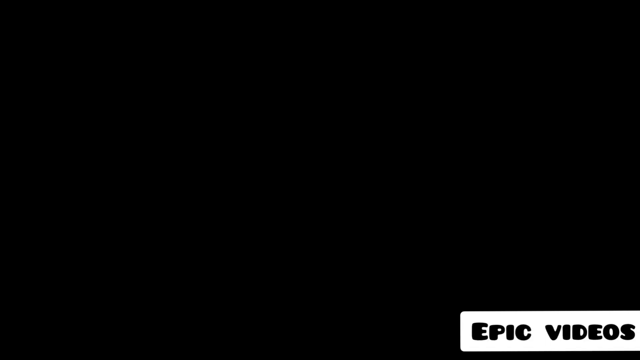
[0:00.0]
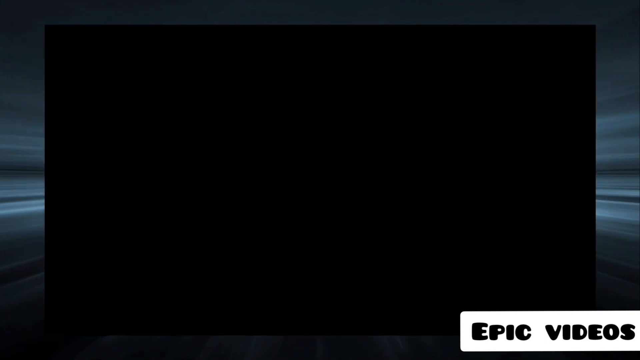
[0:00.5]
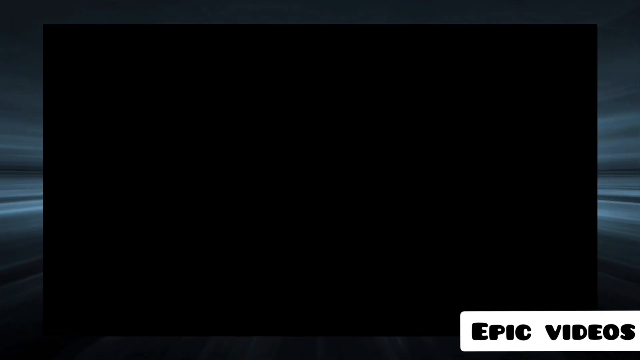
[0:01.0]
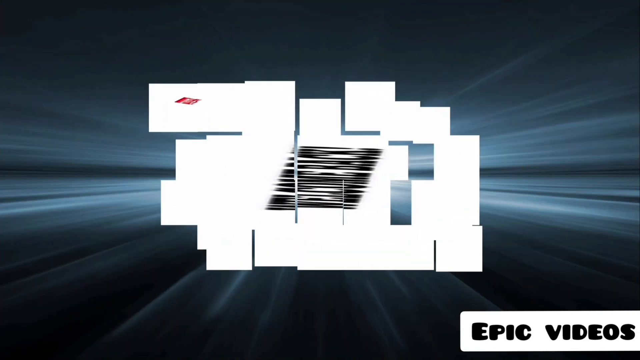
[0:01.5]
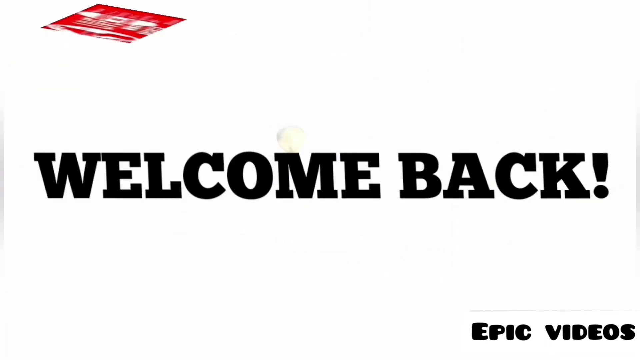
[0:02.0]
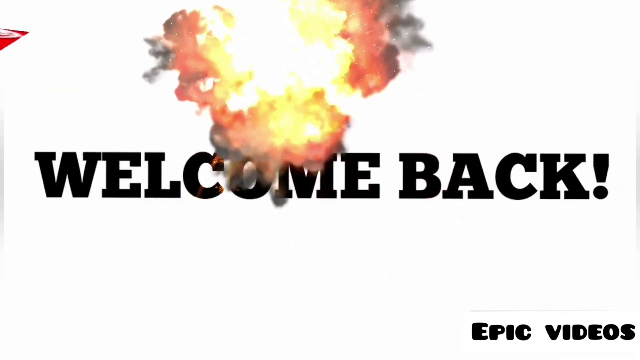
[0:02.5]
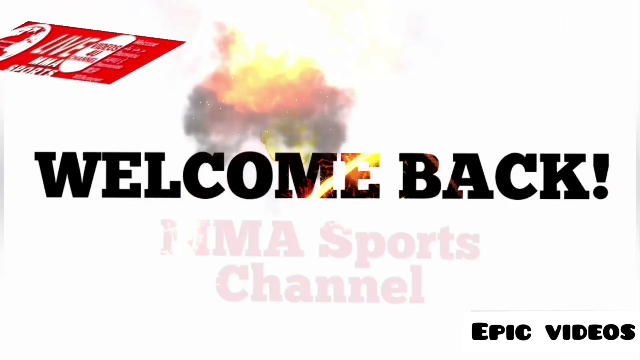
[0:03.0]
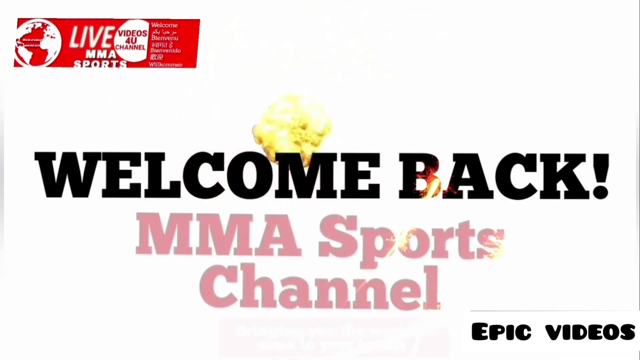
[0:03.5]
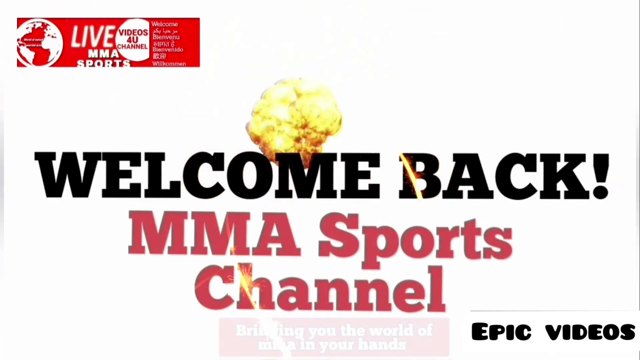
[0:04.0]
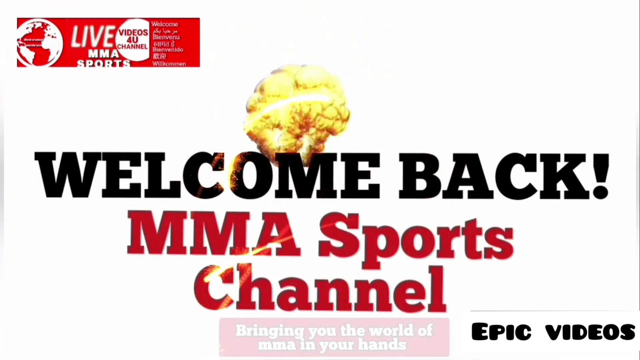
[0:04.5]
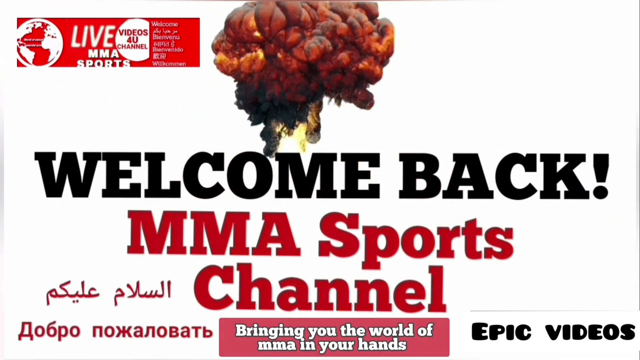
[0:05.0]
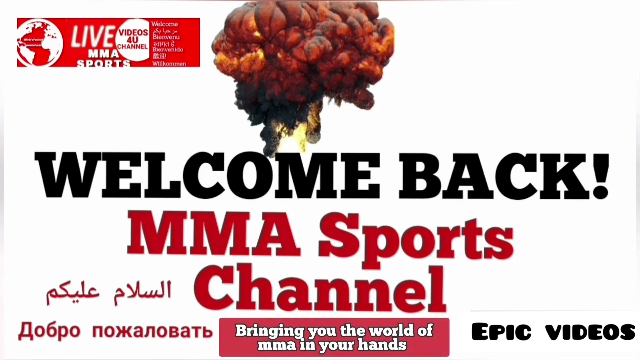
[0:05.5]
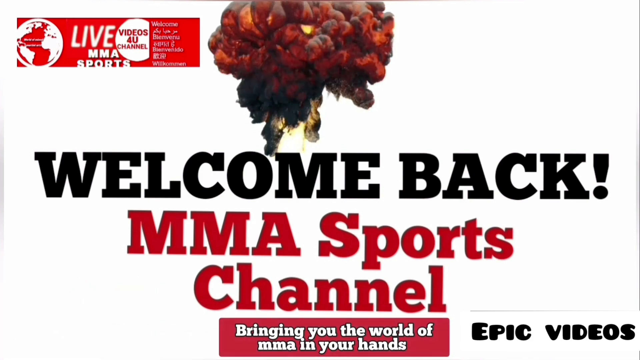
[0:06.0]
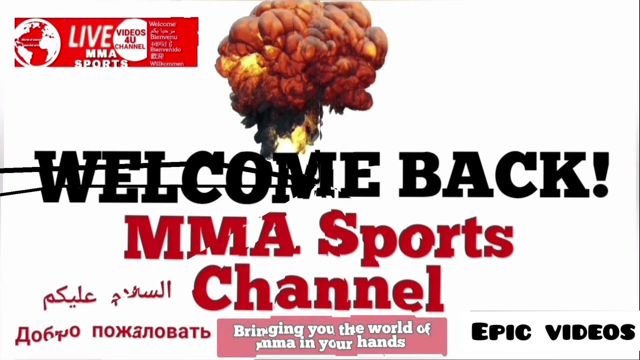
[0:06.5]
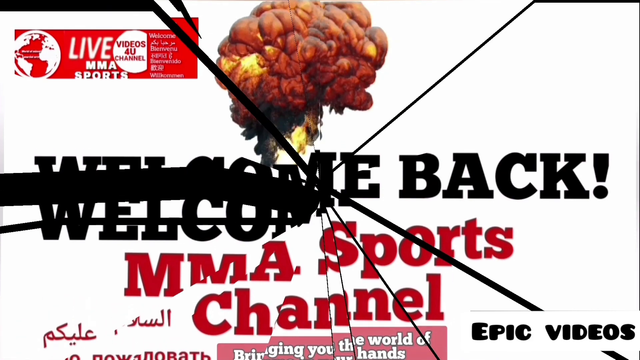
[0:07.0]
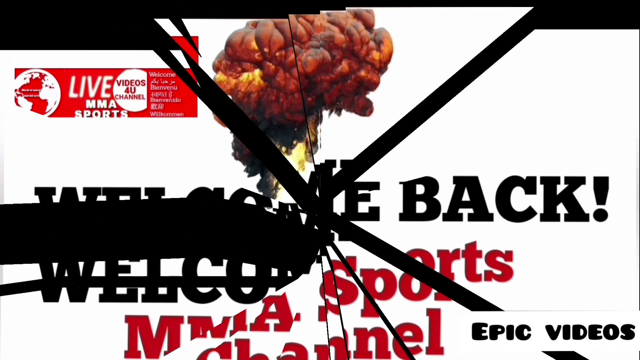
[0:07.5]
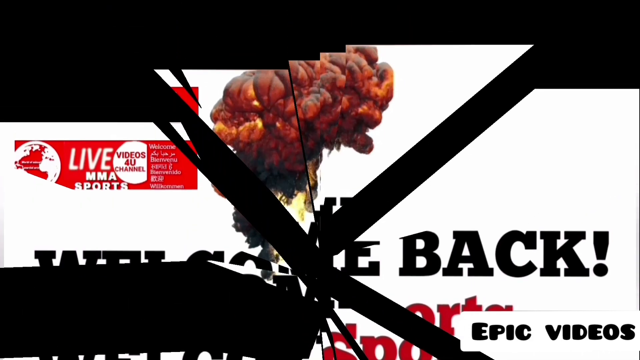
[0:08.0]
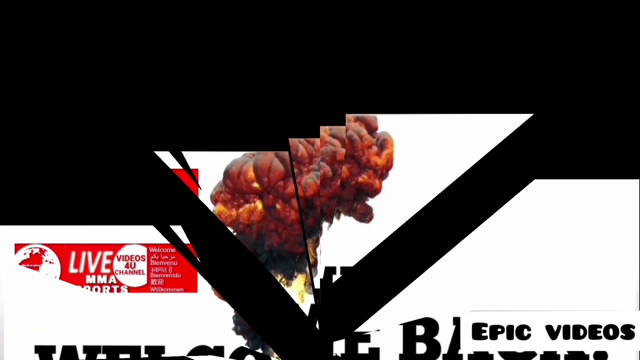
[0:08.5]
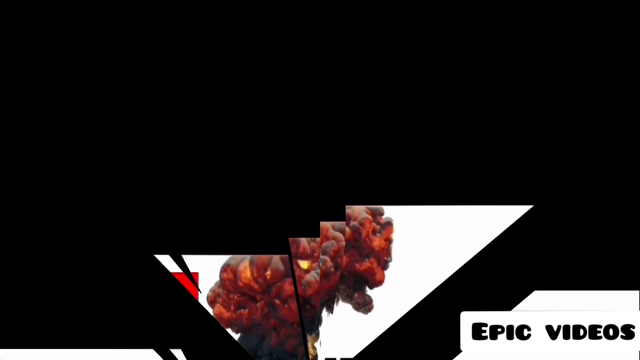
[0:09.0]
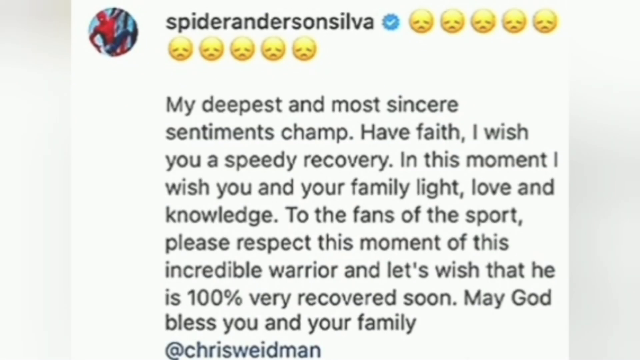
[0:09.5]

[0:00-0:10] The video opens with the words "welcome back" on the screen, identifying it as the "MMA sports channel," with a graphic of an explosion happening above the word "welcome." The screen then flashes to a tweet. The username's logo is Spider-Man, and next to the username are several emojis that are sad faces rather than smiley faces. The tweet begins "my deepest and most sincere sentiment."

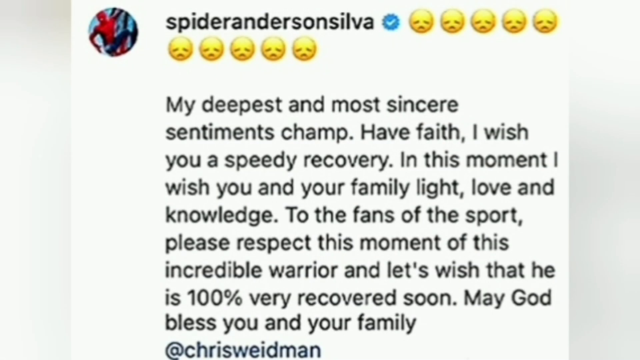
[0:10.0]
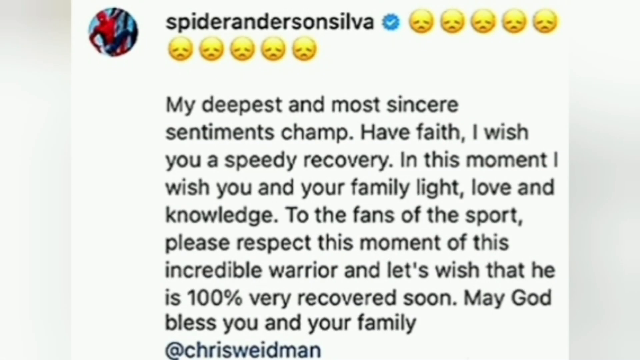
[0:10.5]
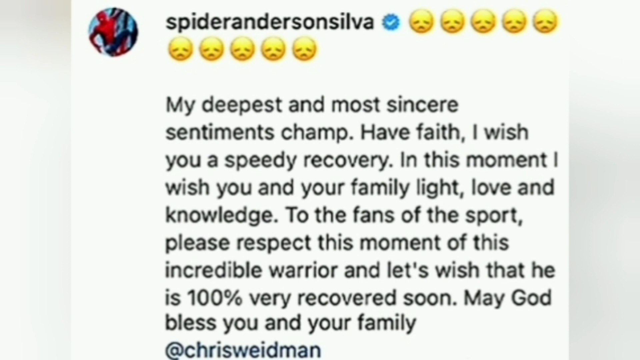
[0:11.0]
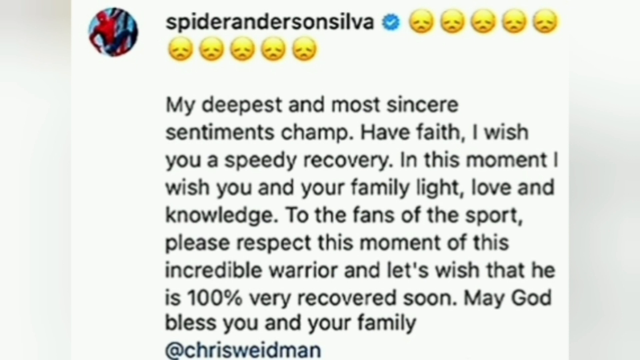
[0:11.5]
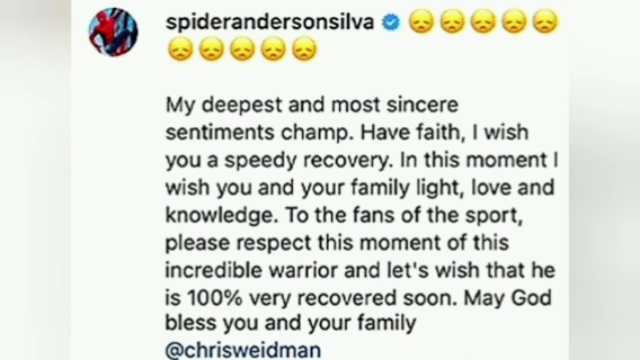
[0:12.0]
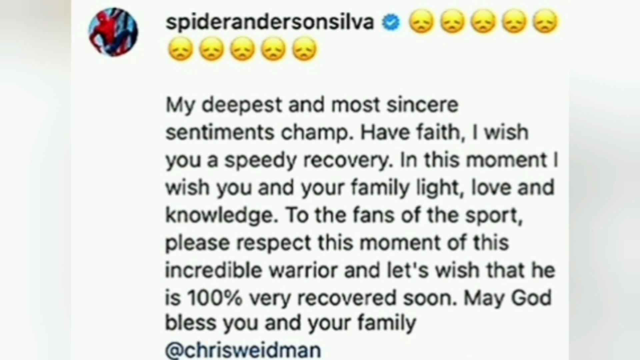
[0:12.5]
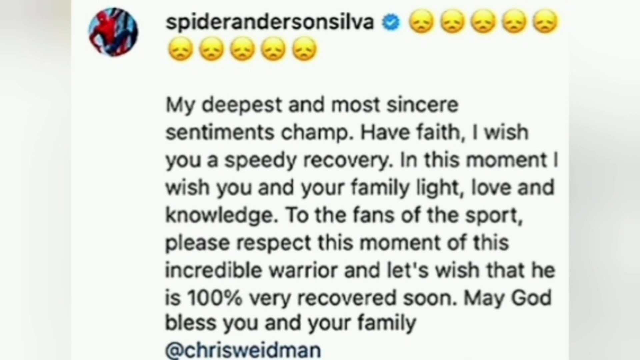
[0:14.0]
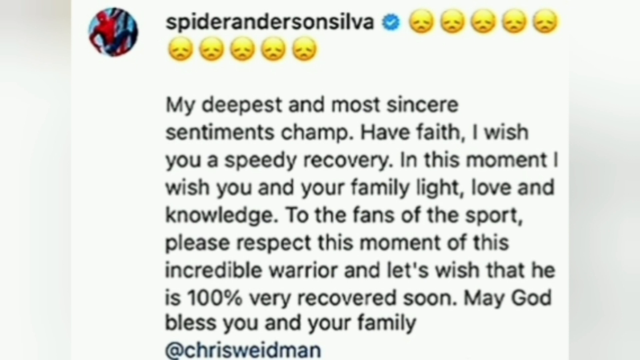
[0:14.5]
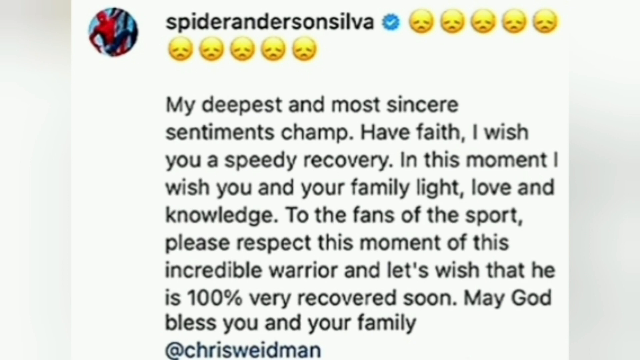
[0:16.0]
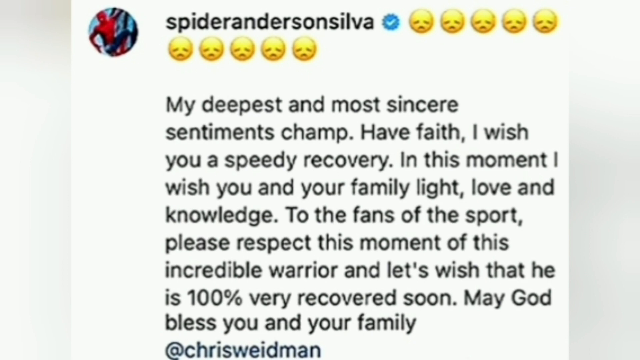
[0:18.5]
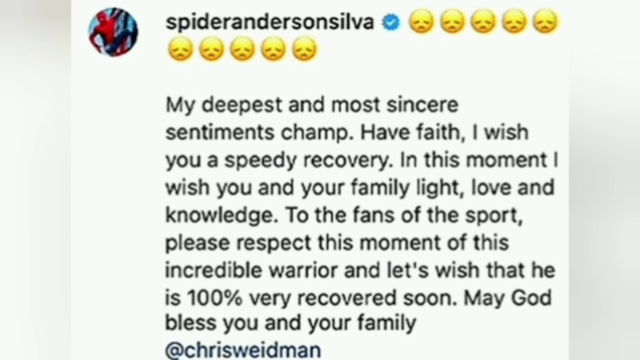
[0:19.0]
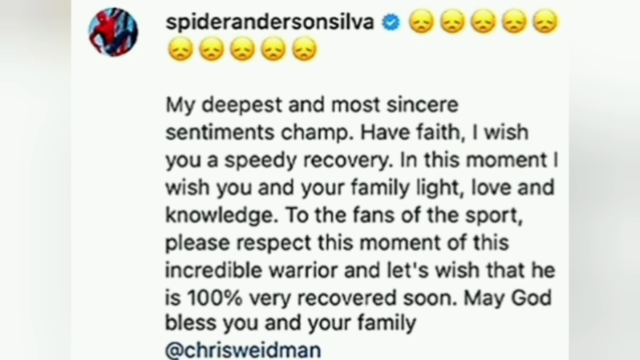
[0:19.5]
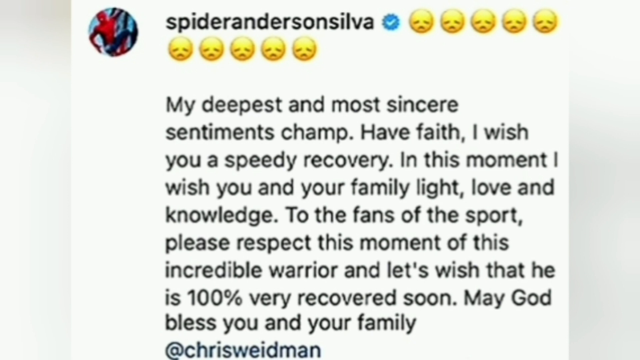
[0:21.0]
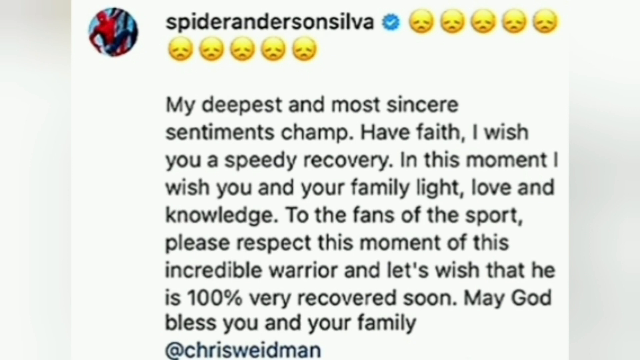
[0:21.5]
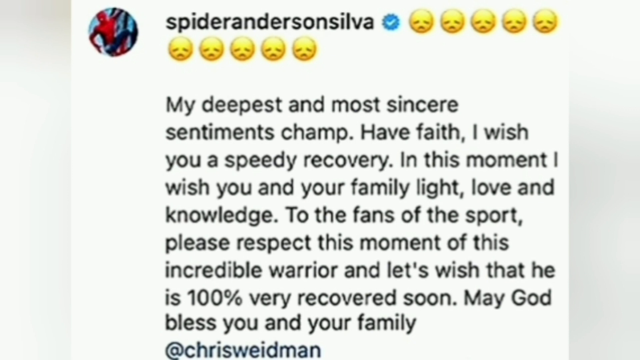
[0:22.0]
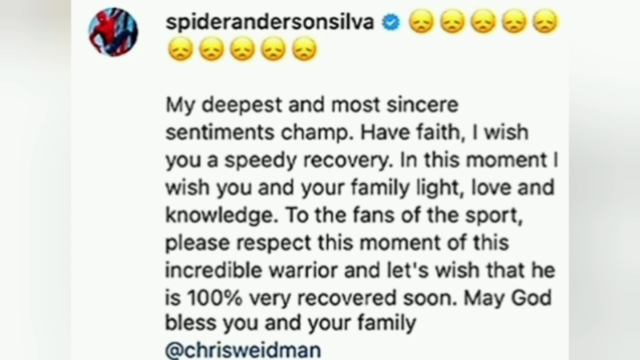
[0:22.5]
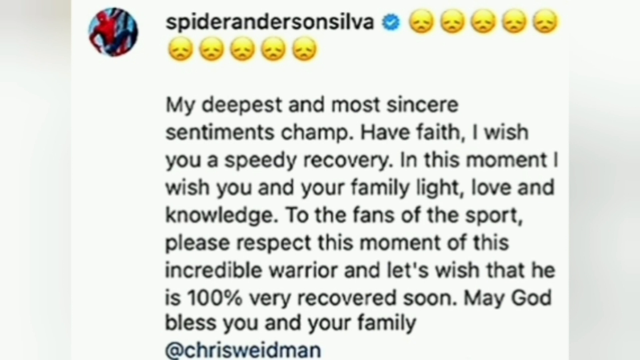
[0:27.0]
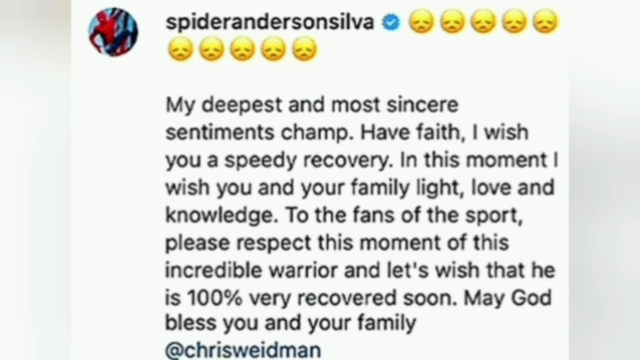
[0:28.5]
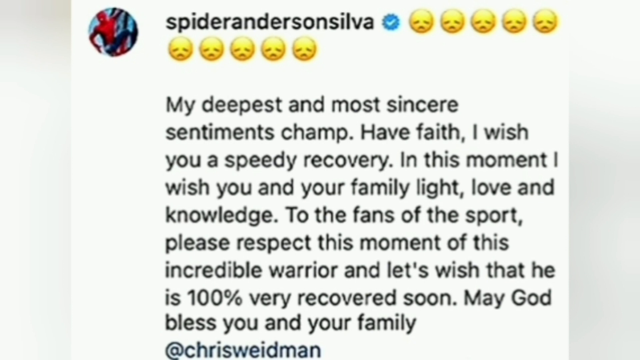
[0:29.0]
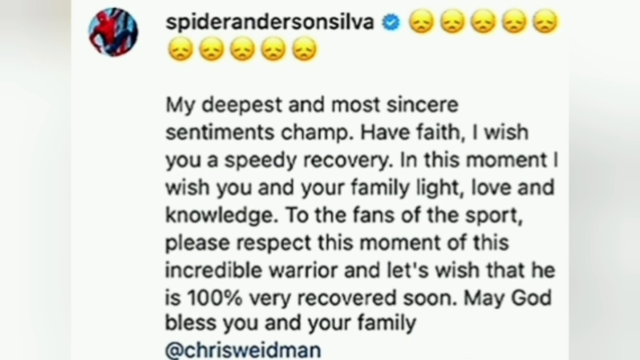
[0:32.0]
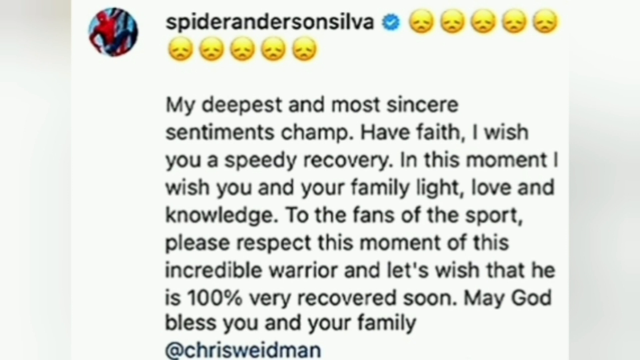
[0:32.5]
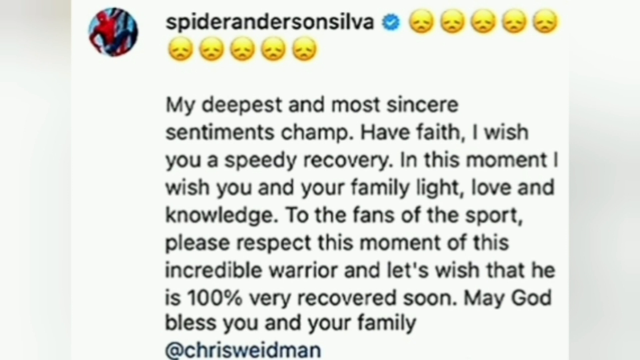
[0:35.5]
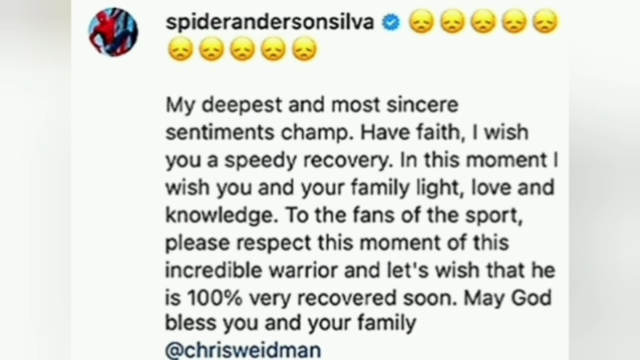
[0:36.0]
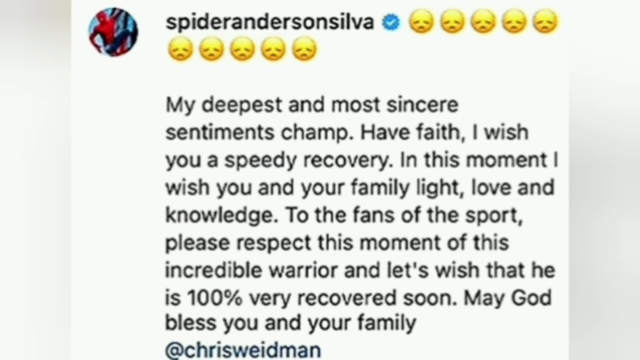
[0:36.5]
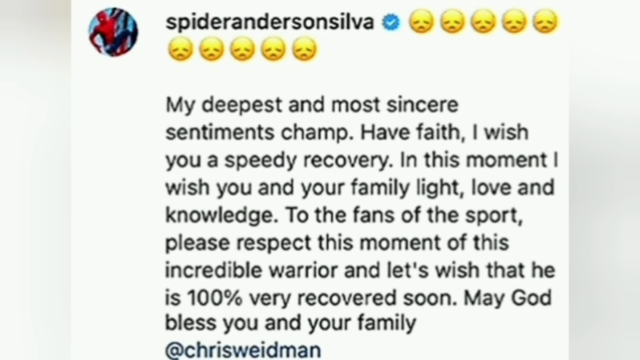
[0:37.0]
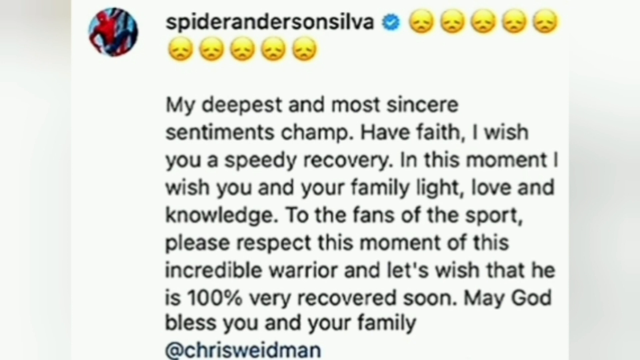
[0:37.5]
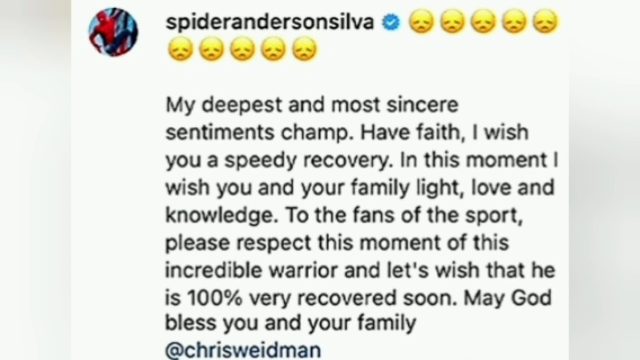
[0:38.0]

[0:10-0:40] A tweet is on the screen. The username is at the top of the screen with a blue checkmark next to it, and next to the checkmark are sad face emojis: five in the first row and another five in the row below the username, ten in total. The user's logo is Spider-Man hanging off the side of a building. The tweet reads: "My deepest and most sincere sentiments" followed by "Have faith. I wish you a speedy recovery. In this moment, I wish you and your family light, love, and knowledge. To the fans of the sport, please respect this moment of the incredible warrior, and let's wish that he is 100% very recovered soon. May God bless you and your family." It is signed from Chris Weidman, wishing someone a speedy recovery.